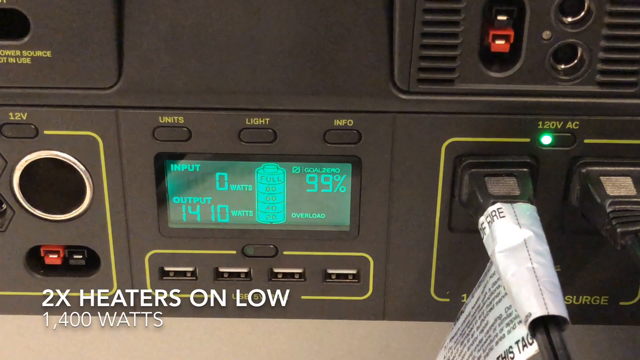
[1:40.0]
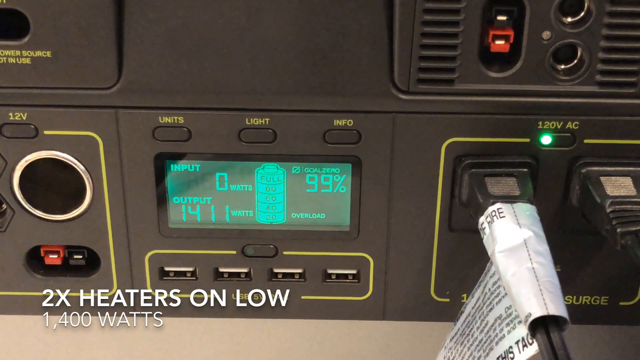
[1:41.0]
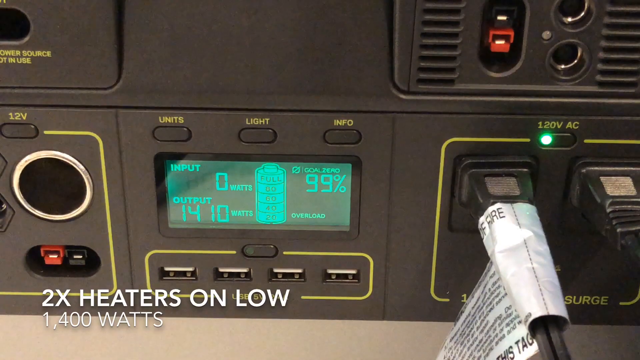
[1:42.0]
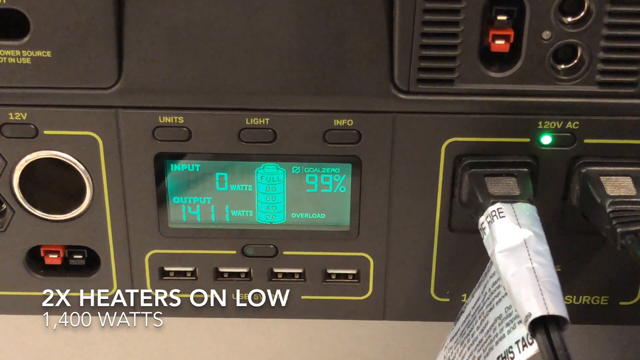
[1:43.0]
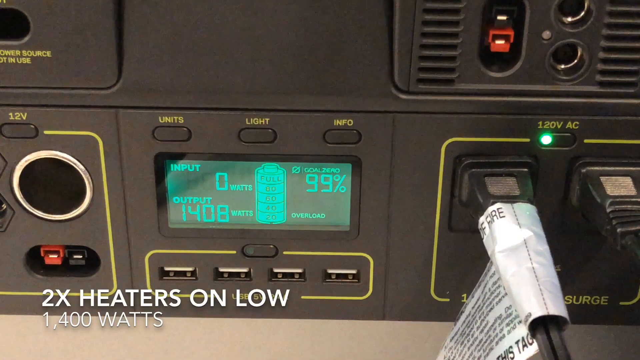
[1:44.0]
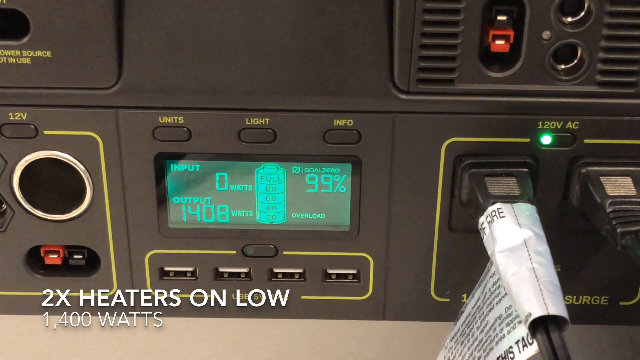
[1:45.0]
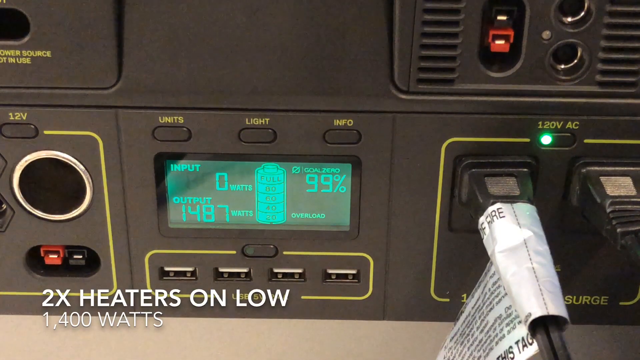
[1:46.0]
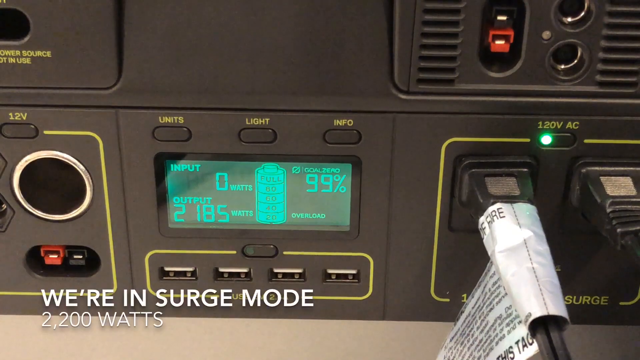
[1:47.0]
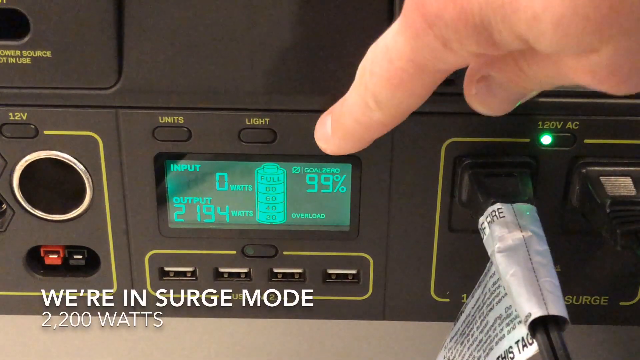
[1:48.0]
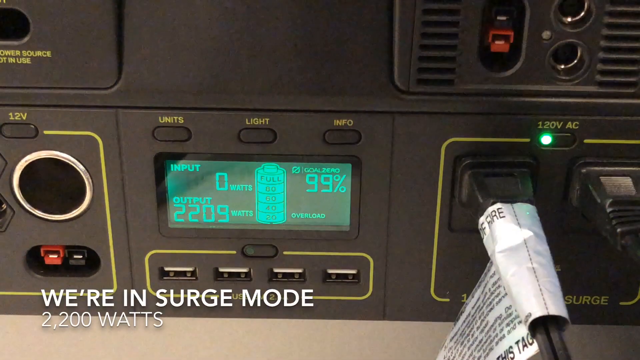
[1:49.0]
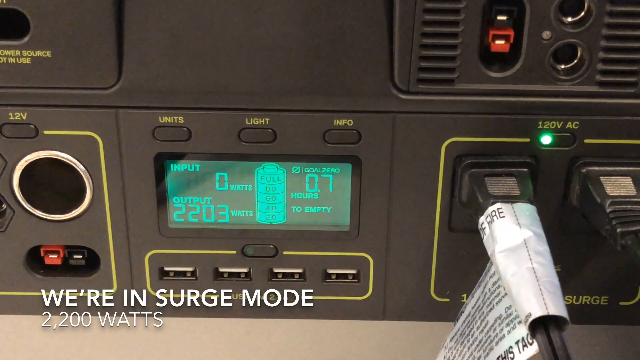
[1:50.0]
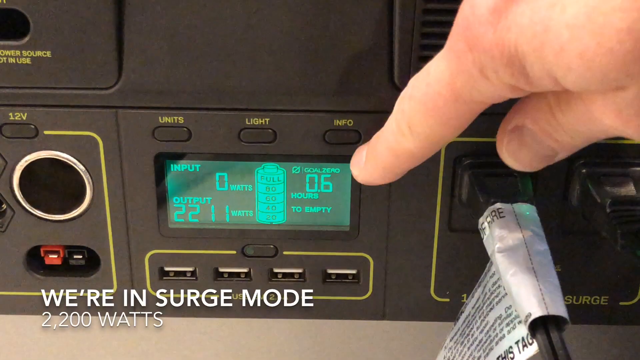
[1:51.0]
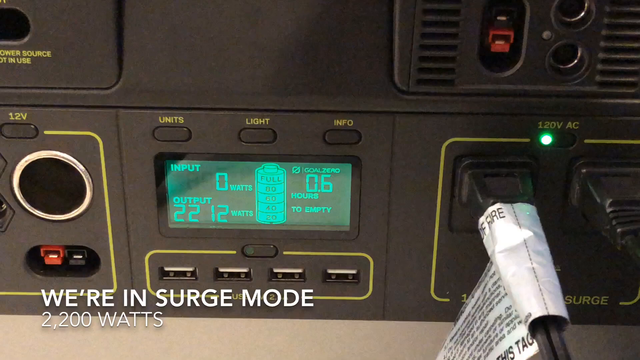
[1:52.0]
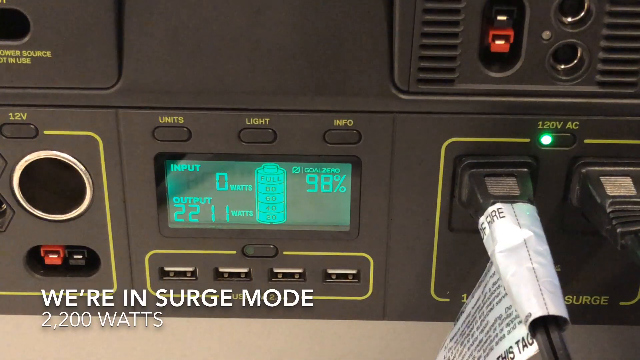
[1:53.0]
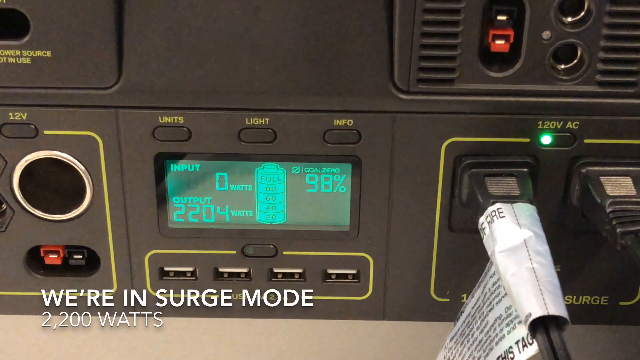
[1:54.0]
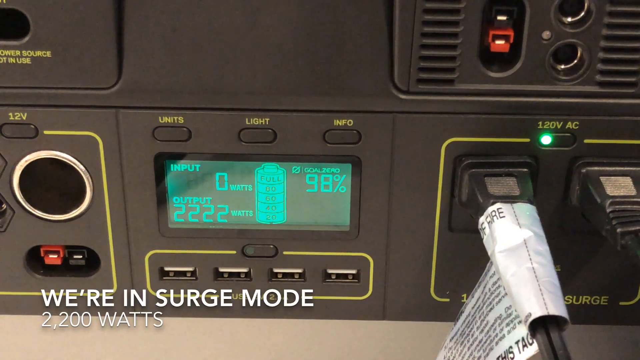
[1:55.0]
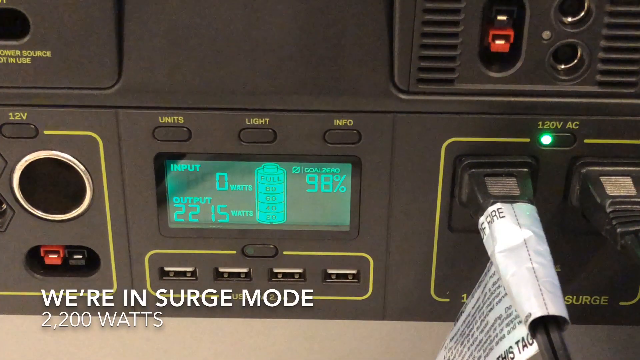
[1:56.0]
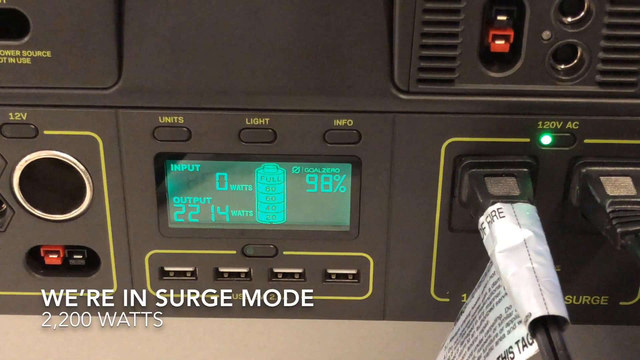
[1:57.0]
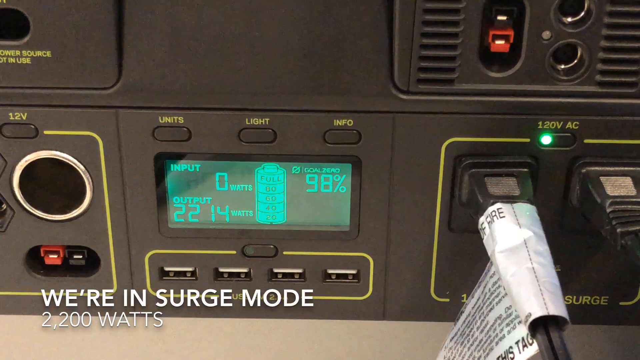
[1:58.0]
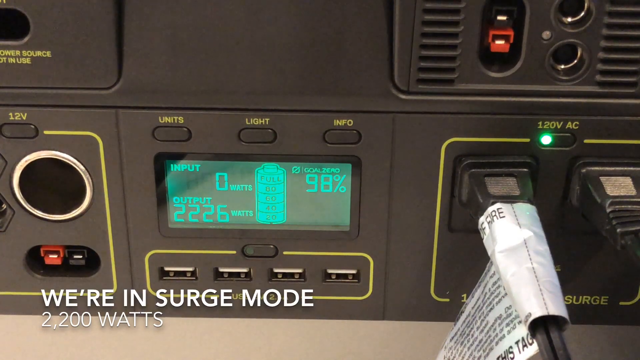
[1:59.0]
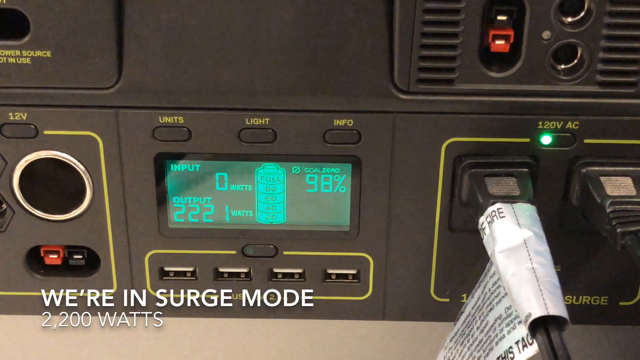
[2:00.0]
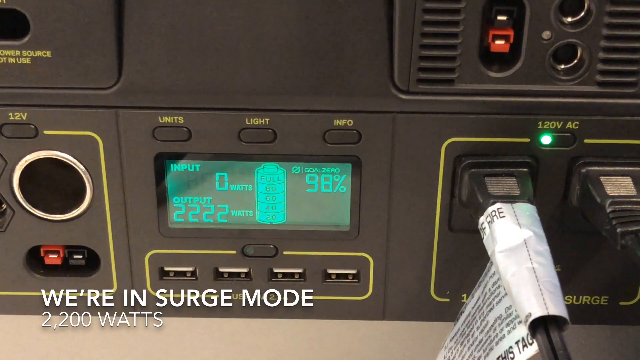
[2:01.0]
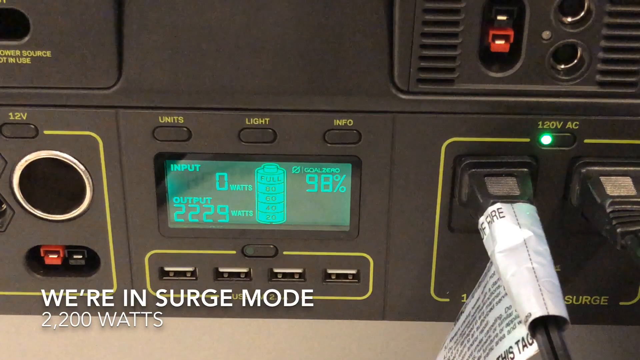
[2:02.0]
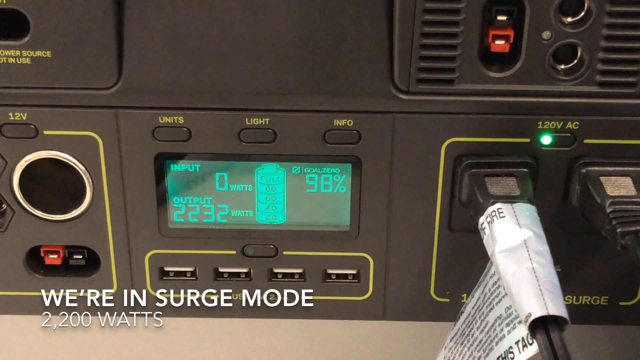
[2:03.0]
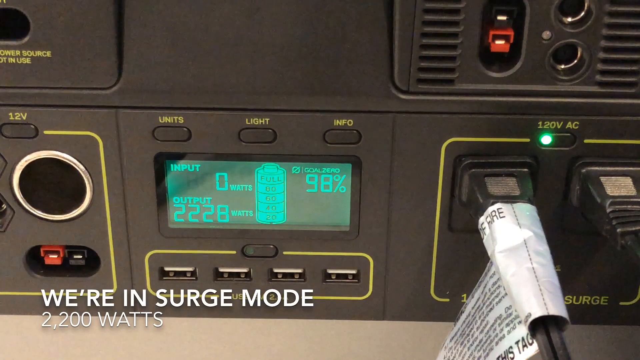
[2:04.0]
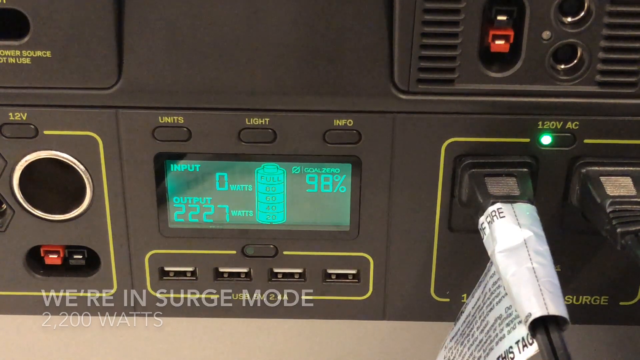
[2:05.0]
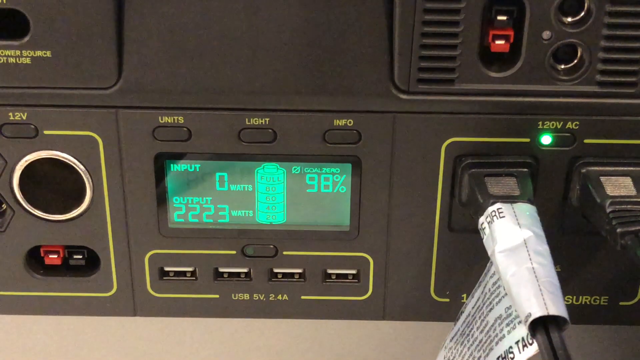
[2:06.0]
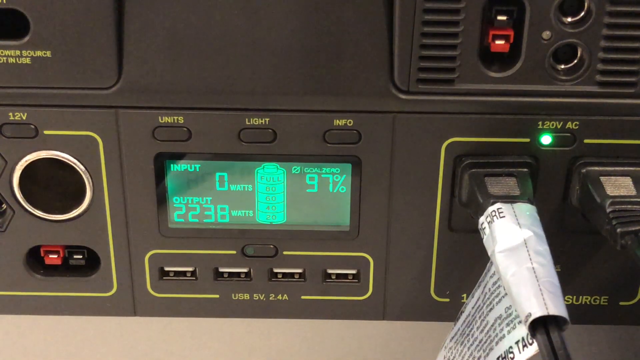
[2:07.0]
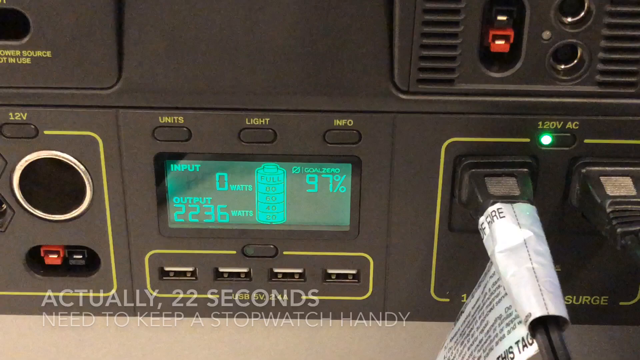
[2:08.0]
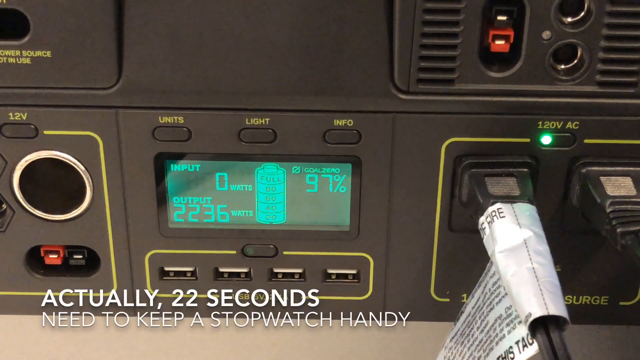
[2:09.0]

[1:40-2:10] Text reads "two times heaters on low, 1400 watts". A screen is shown very close up, and it now reads "surge mode 2200 watts". The wattage numbers on the screen go up. A hand reaches over and pushes a button, then disappears. In the lower left-hand corner the screen reads "actually 22 seconds". A plug is in a port on the back of the receiver, with a white label wrapped around its cord. A light is illuminated under the 120 volt AC button. Above it are other unoccupied ports, and to the left of the screen are additional unoccupied ports. The devices being powered are not visible.